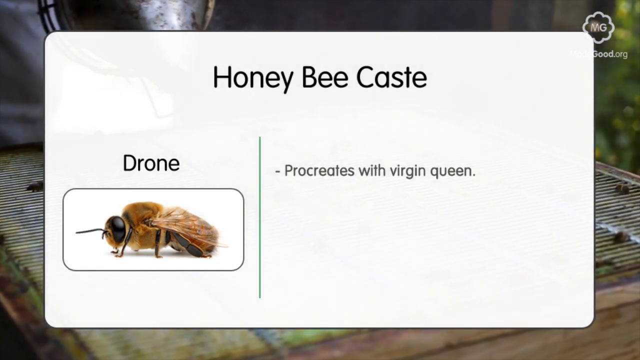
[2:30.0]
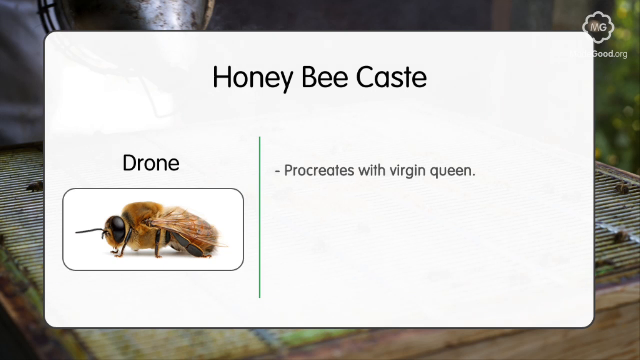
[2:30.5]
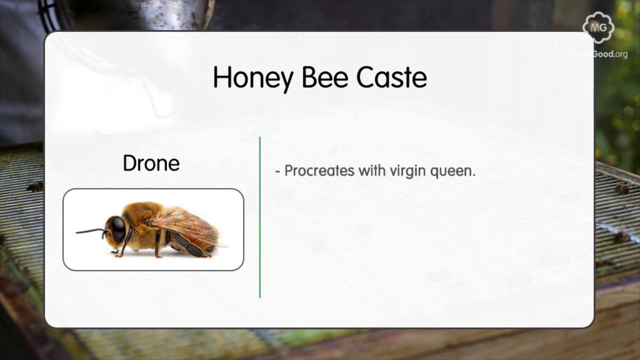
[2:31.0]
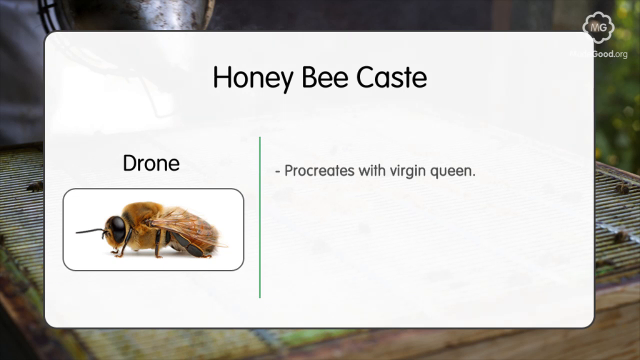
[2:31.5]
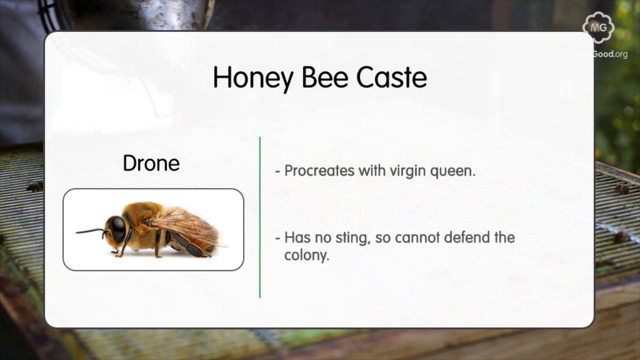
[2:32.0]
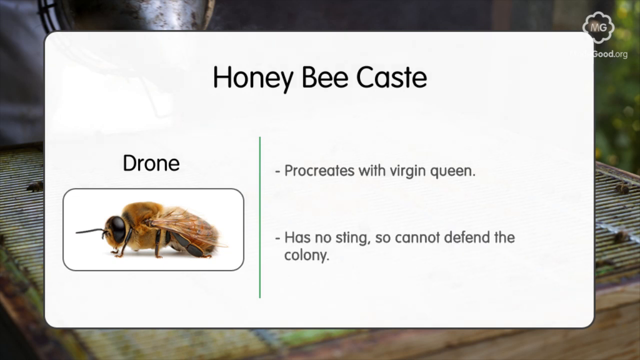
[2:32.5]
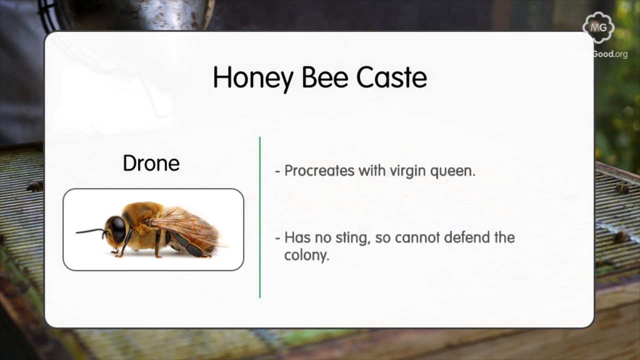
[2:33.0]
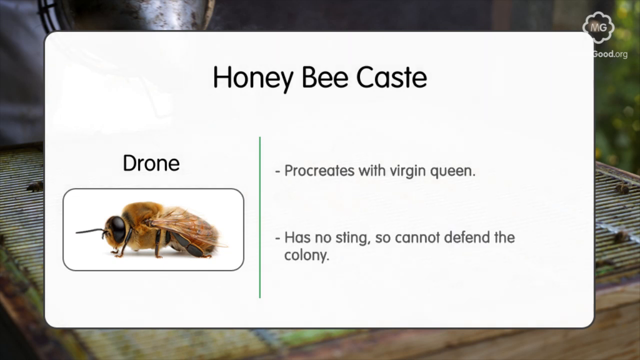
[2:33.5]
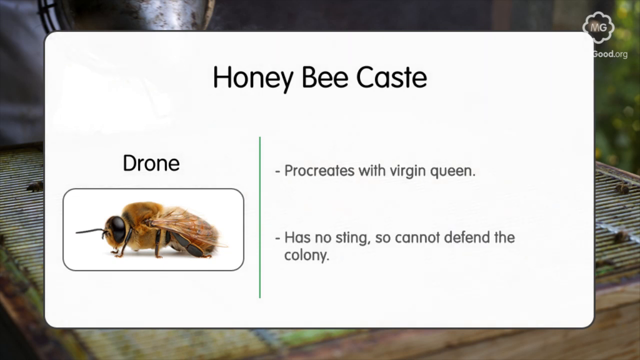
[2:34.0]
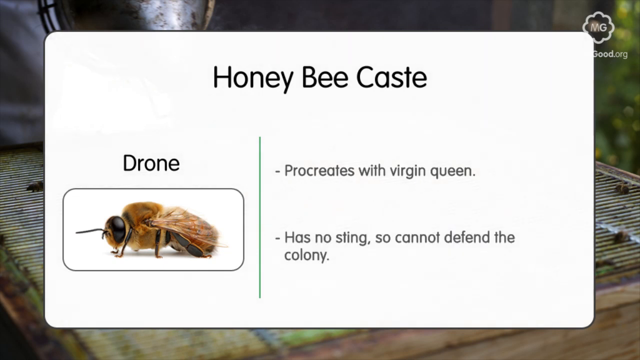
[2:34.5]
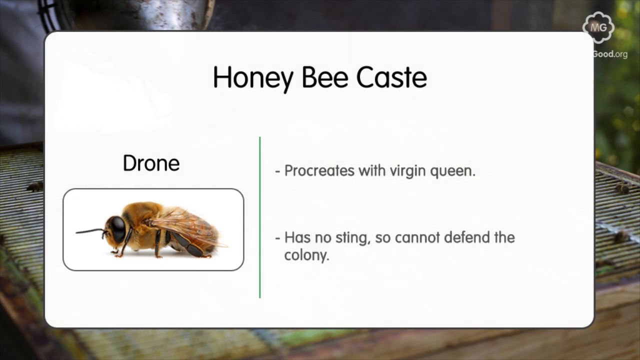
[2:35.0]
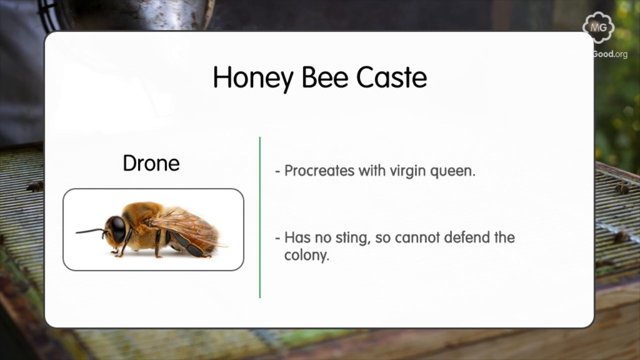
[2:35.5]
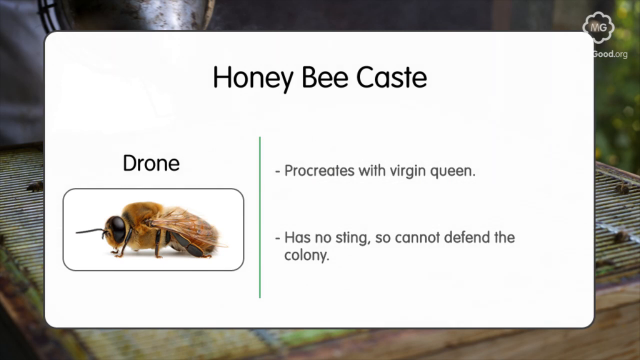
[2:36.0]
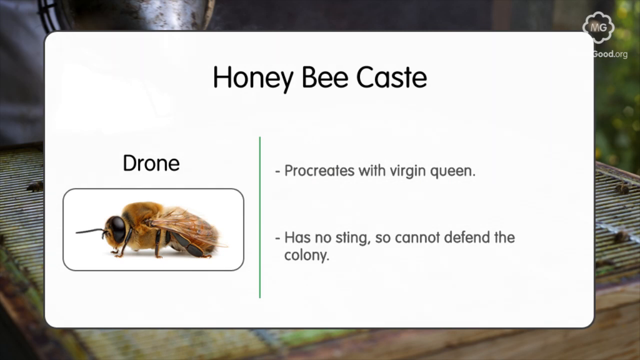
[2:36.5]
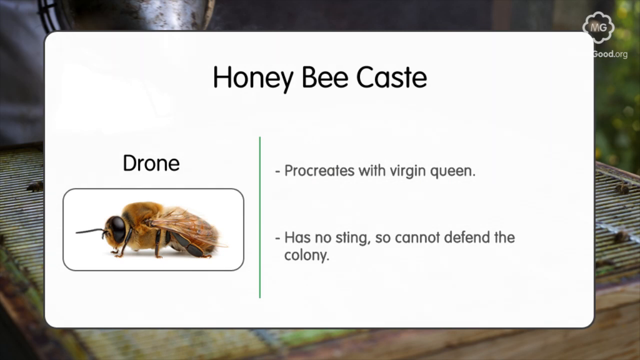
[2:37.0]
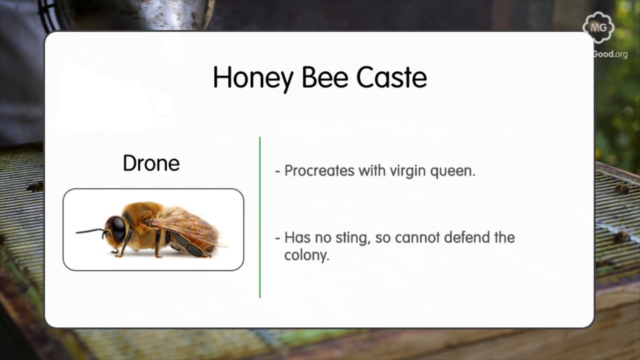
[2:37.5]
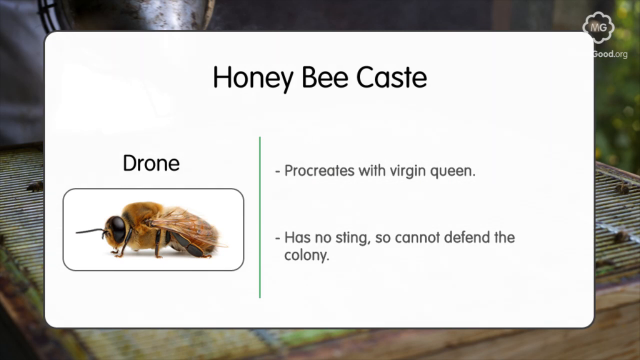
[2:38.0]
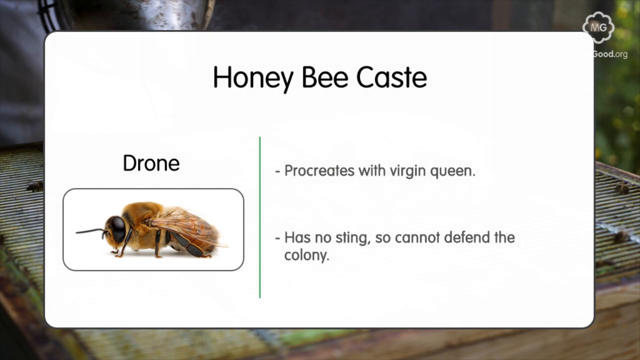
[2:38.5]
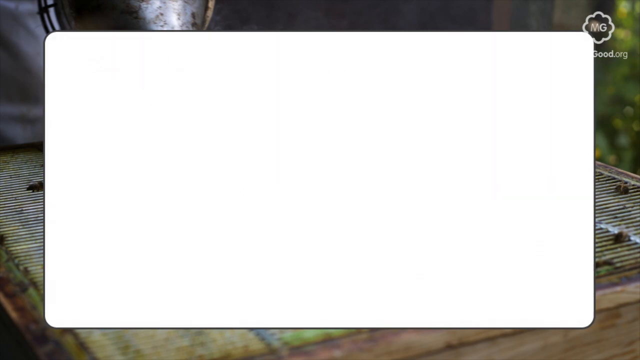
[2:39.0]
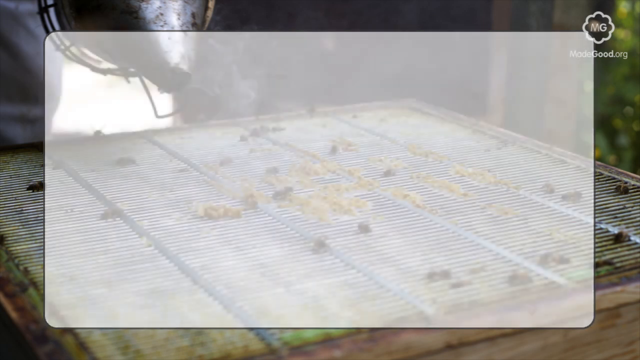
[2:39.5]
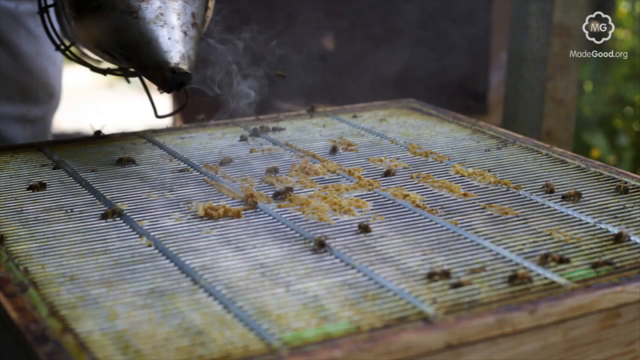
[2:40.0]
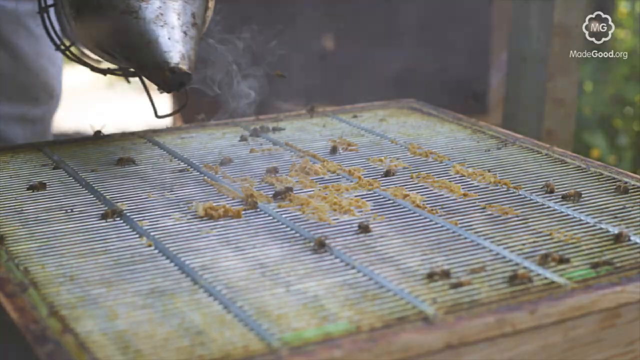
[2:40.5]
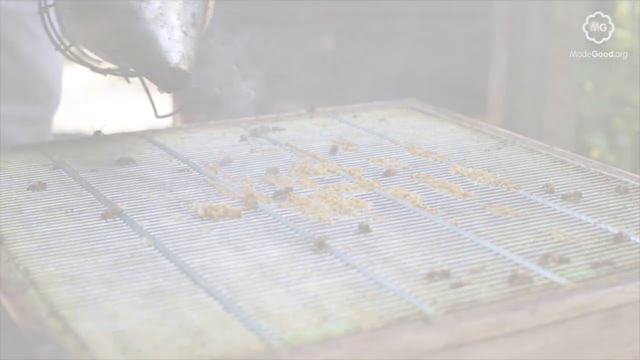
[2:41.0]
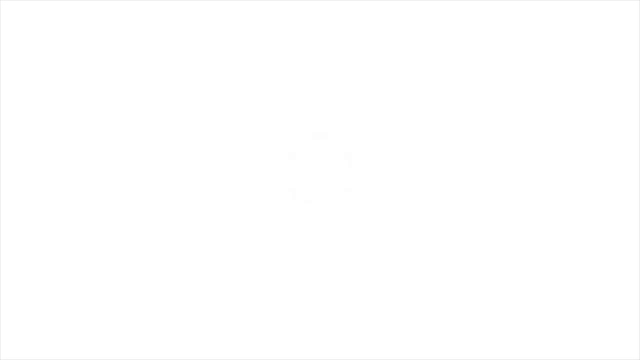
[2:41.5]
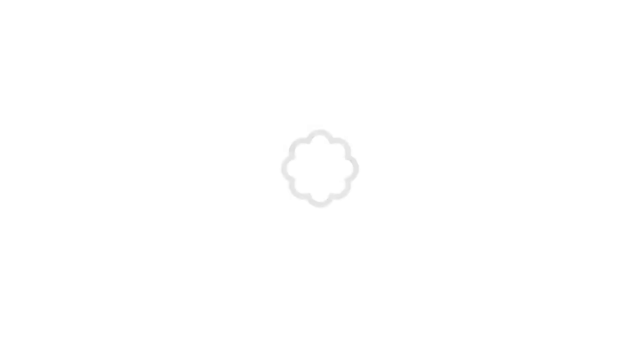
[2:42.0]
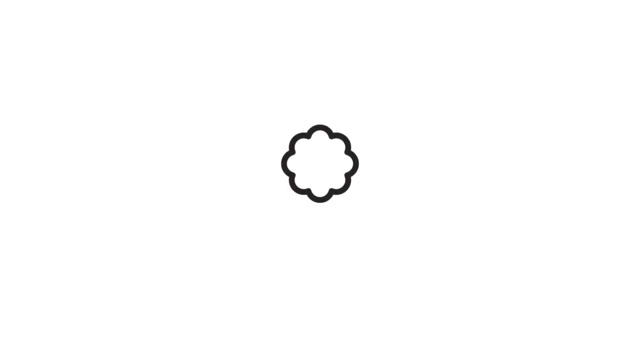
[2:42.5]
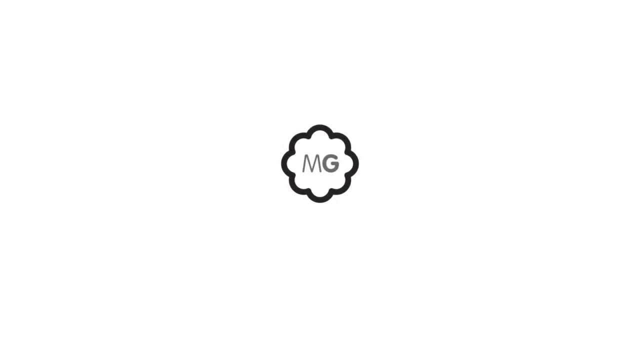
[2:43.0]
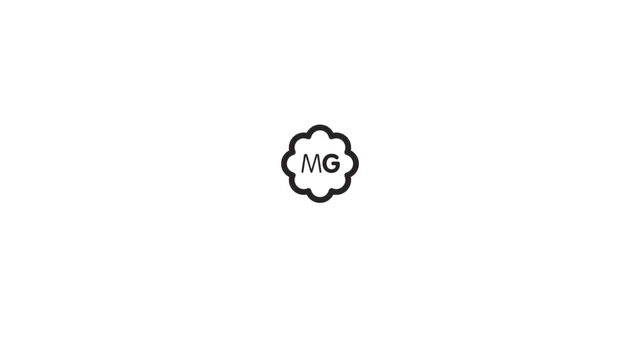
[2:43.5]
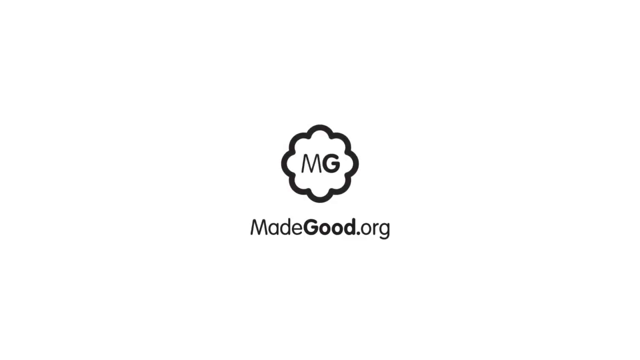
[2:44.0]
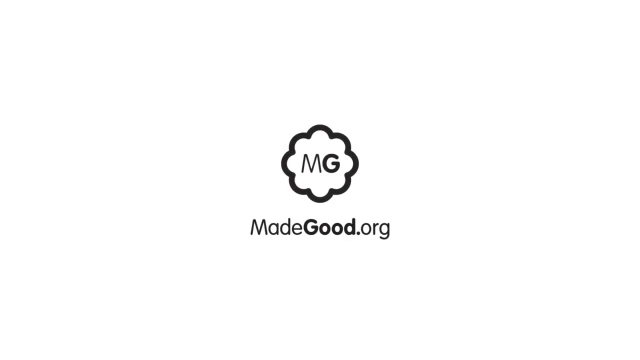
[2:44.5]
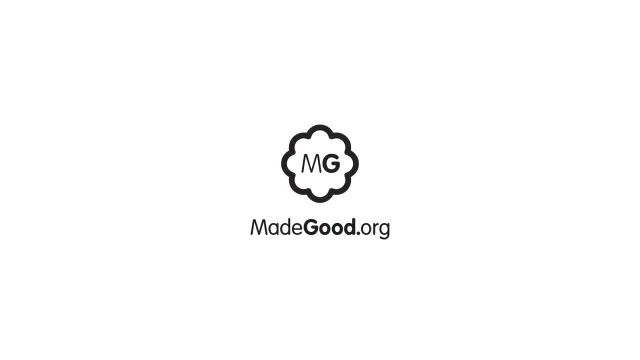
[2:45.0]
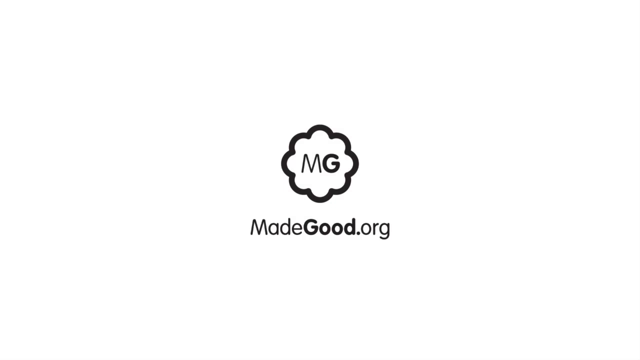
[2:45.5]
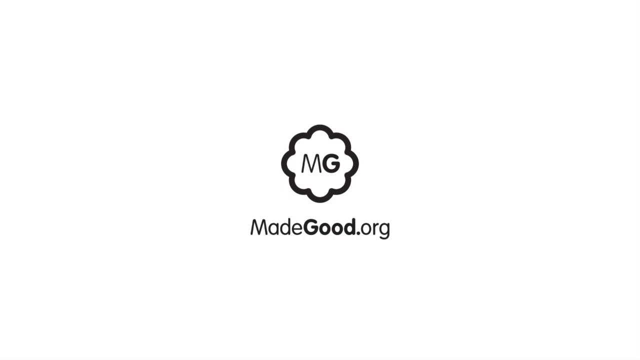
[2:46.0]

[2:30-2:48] The infographic reads "Honeybee Cast" at the top and features the drone bee, with the text "procreates with a virgin queen" and a second bullet point, "has no sting, so cannot defend the colony". It then transitions to a screen with an MG logo with a black outline on a white background, and underneath it "madegood.org" in black text on a white background. It looks like the end of the video, showing who made it. There also appears to be an MG logo at the bottom right with more details about the channel that made the video.